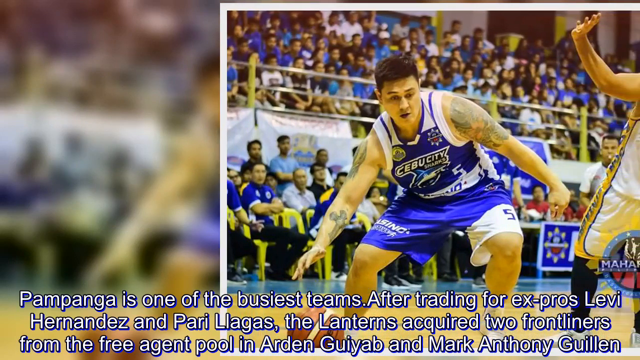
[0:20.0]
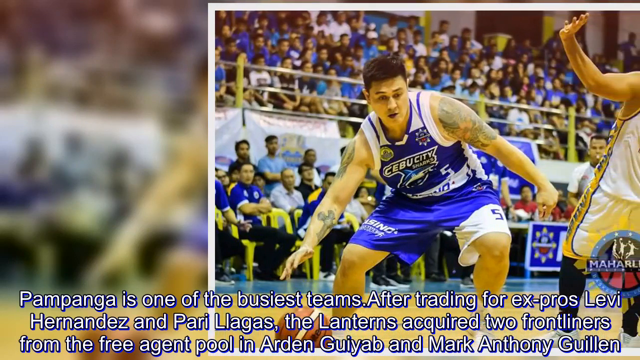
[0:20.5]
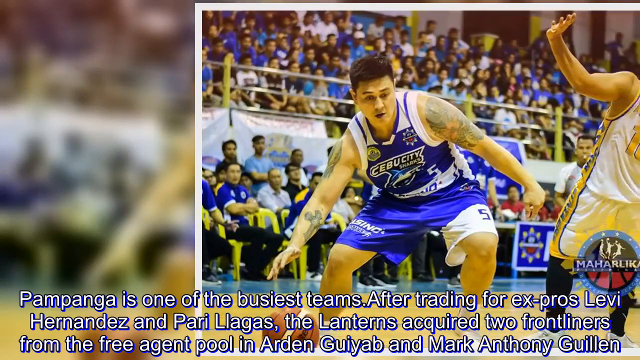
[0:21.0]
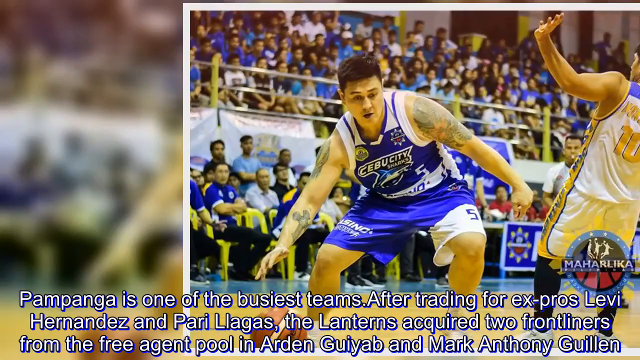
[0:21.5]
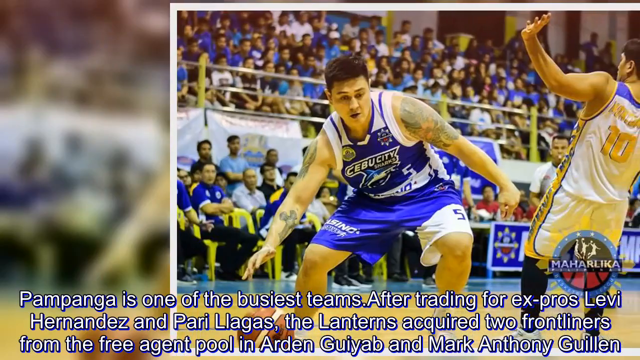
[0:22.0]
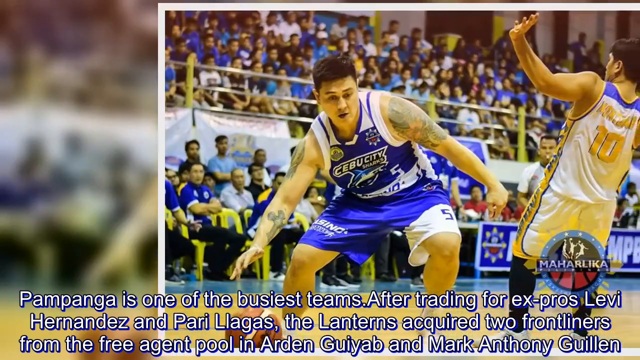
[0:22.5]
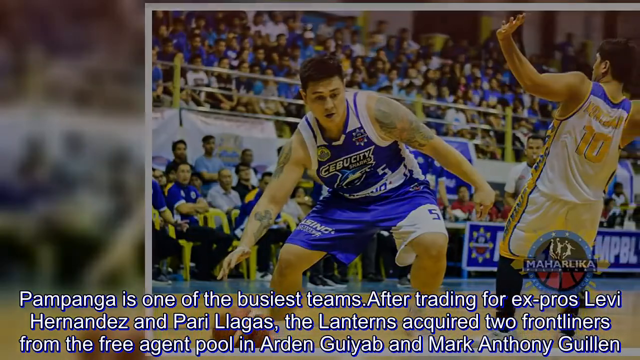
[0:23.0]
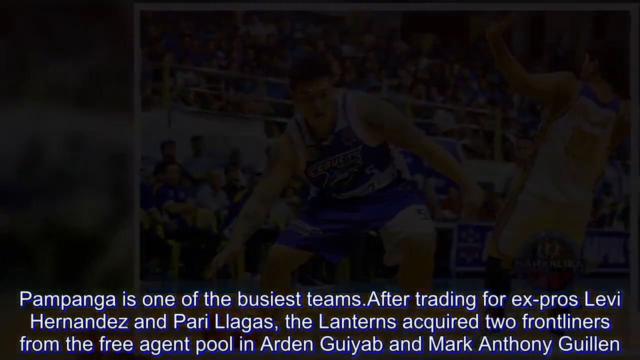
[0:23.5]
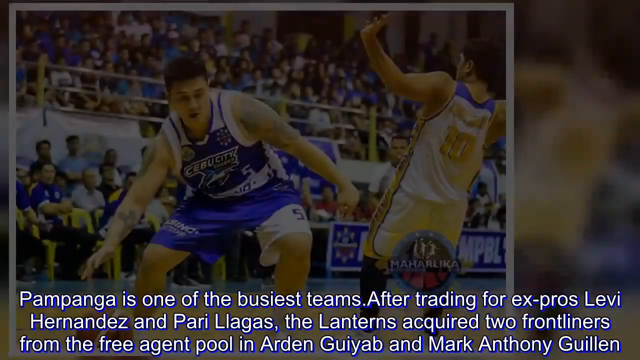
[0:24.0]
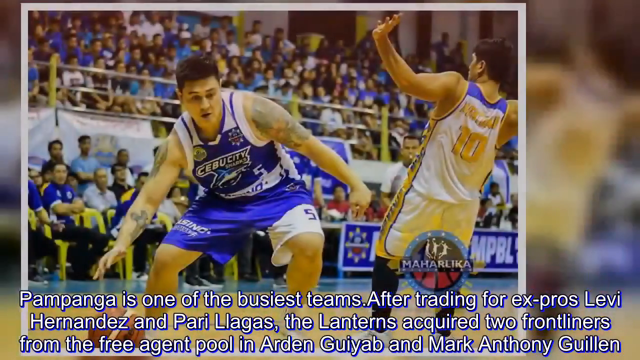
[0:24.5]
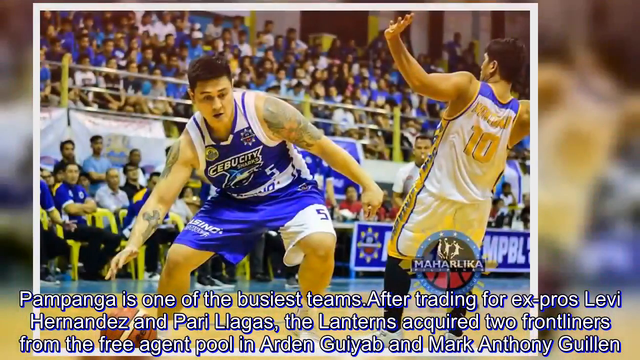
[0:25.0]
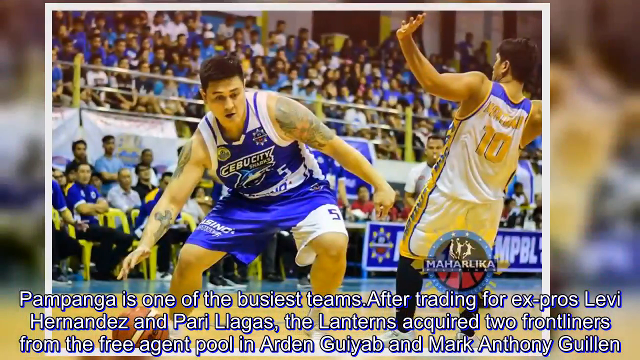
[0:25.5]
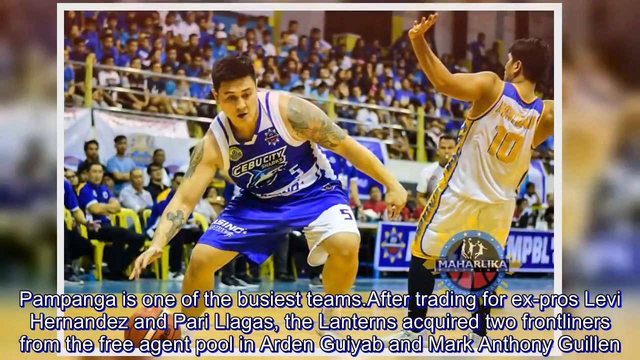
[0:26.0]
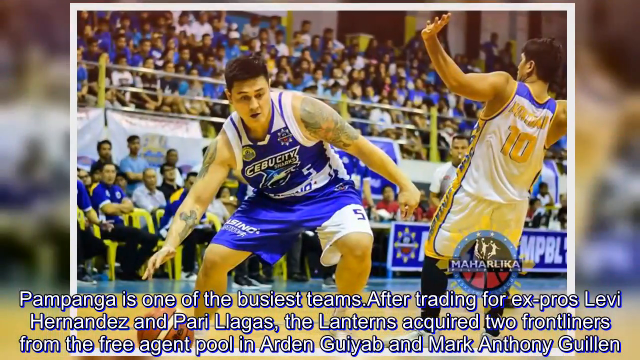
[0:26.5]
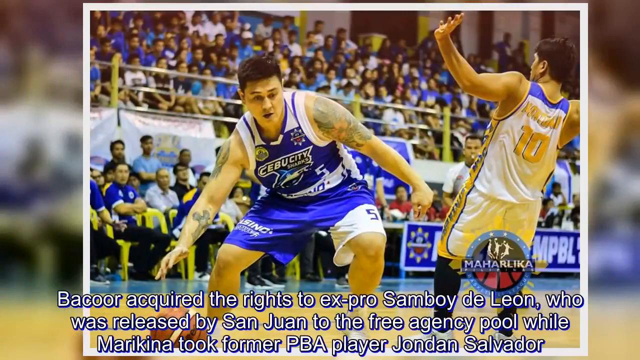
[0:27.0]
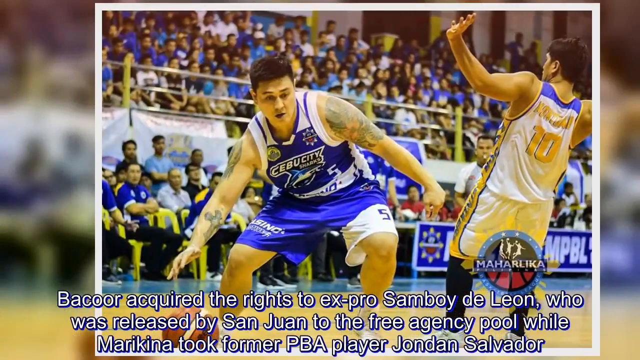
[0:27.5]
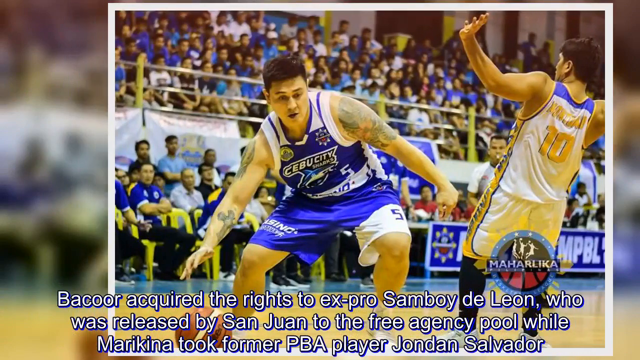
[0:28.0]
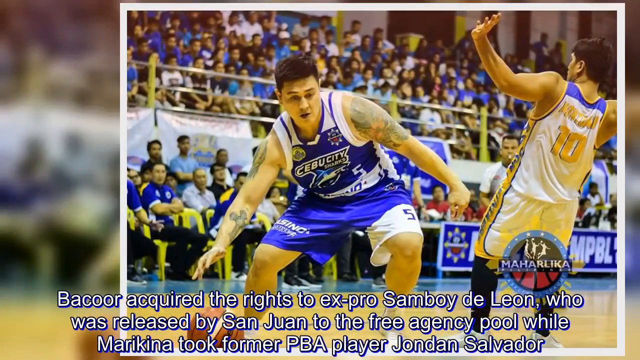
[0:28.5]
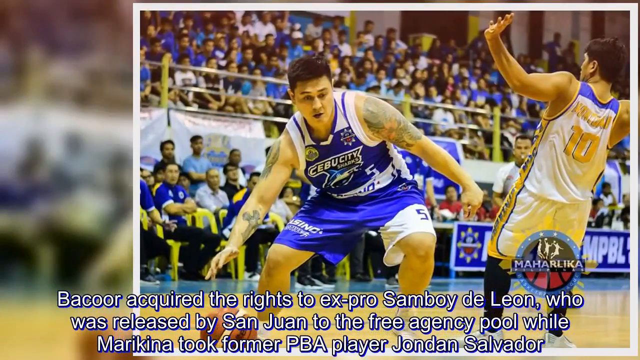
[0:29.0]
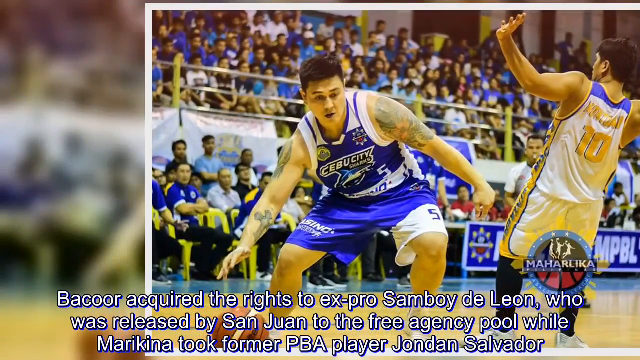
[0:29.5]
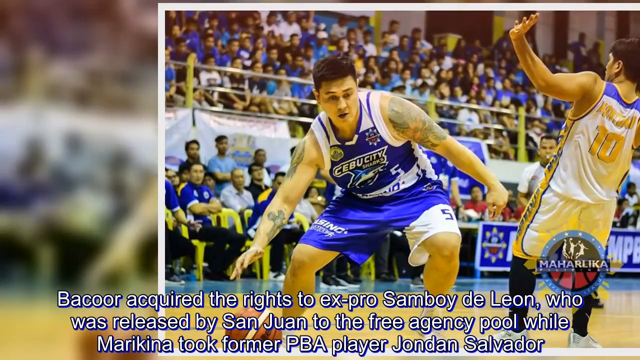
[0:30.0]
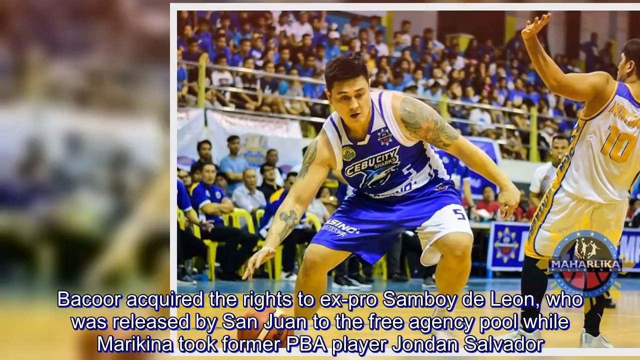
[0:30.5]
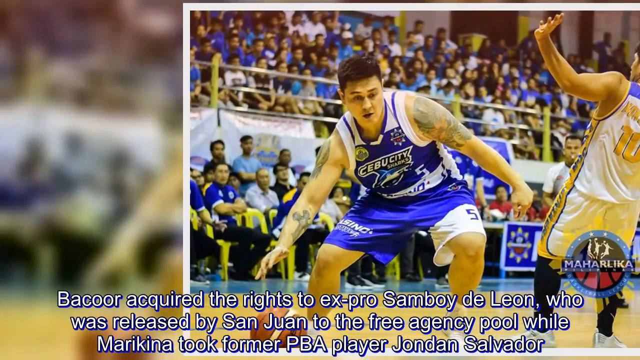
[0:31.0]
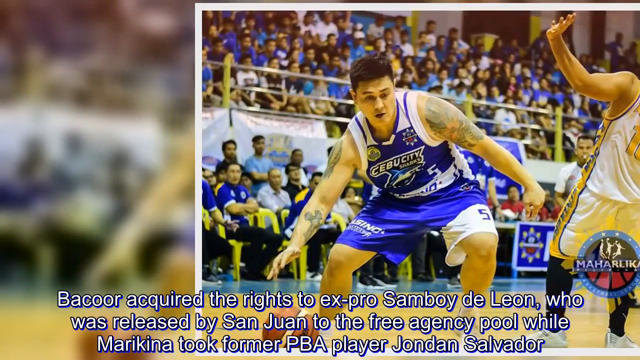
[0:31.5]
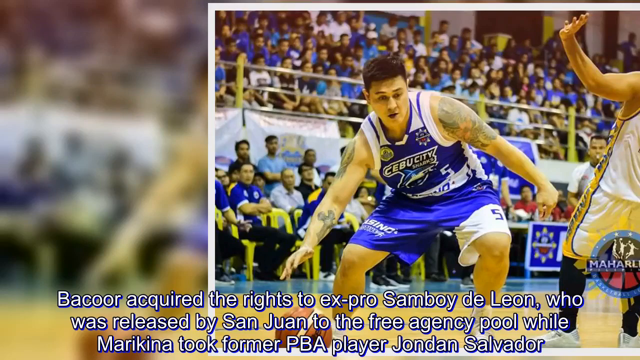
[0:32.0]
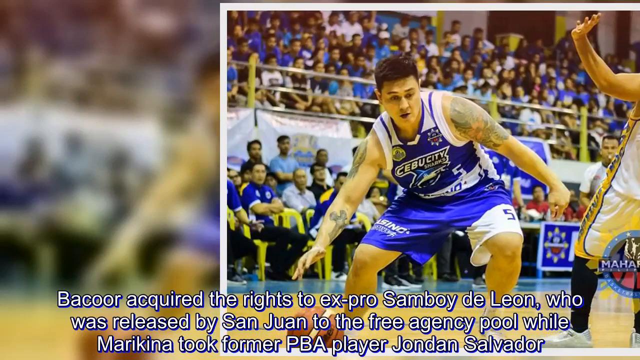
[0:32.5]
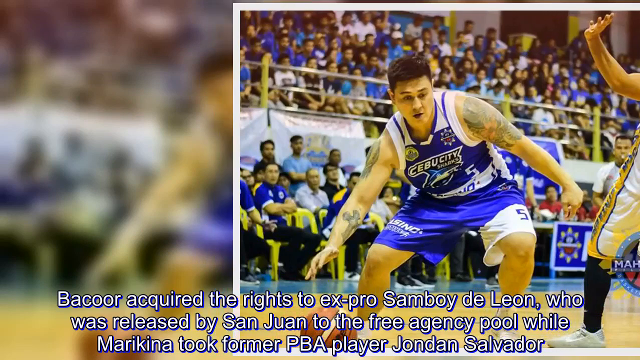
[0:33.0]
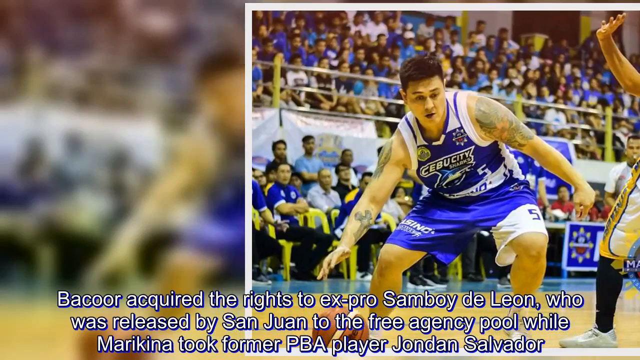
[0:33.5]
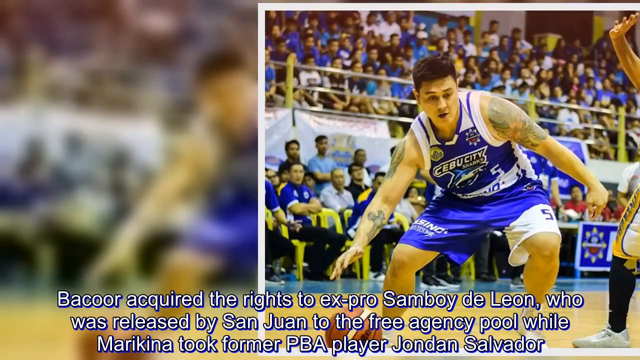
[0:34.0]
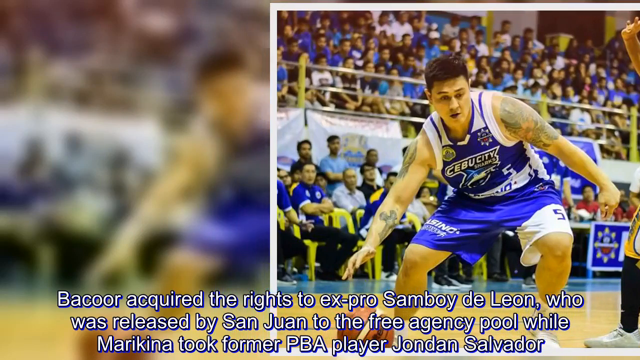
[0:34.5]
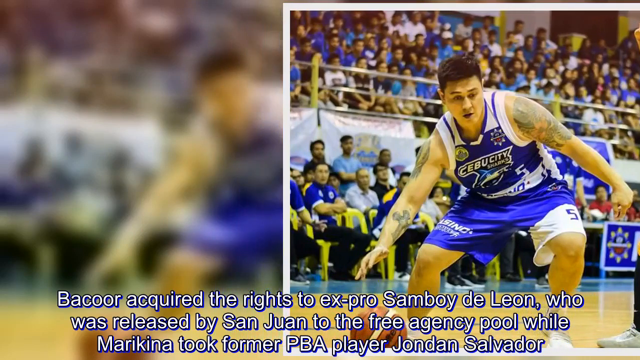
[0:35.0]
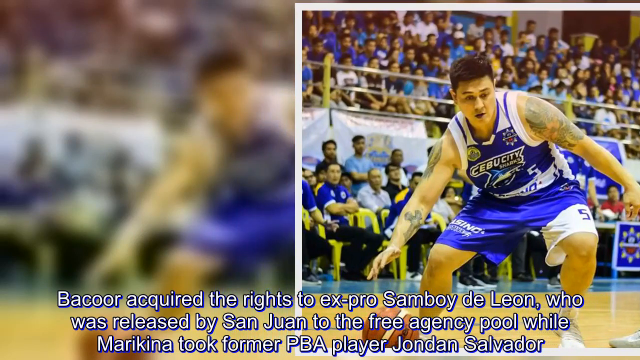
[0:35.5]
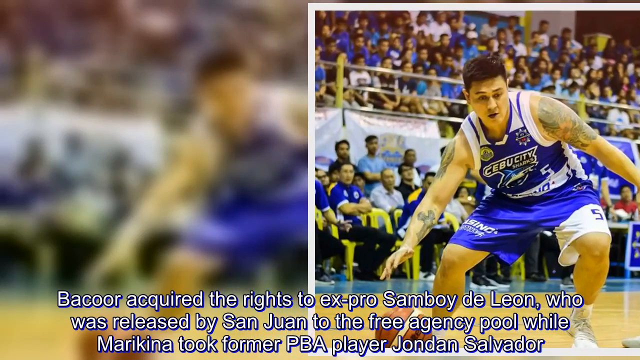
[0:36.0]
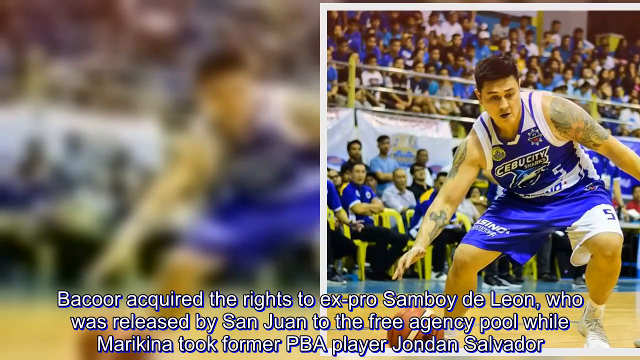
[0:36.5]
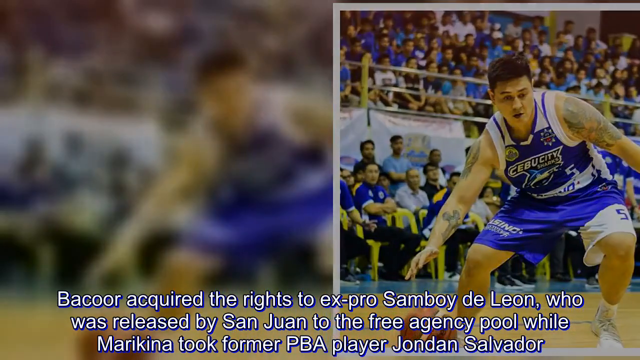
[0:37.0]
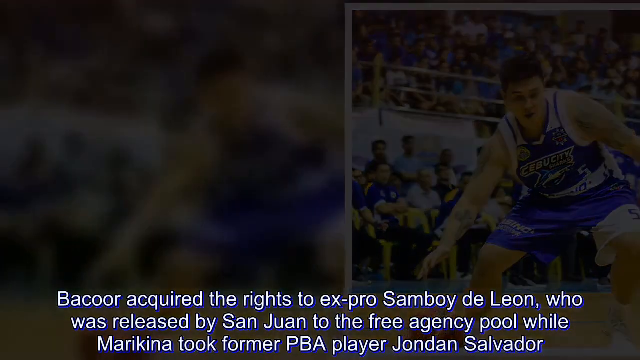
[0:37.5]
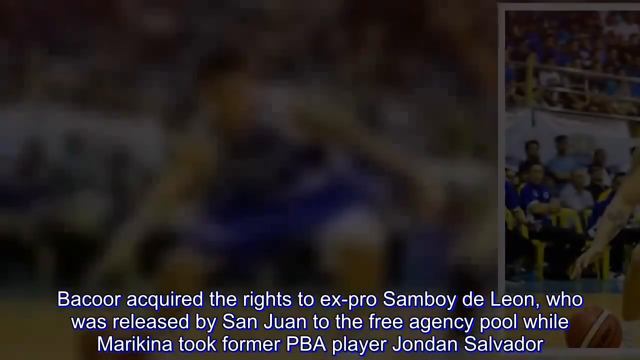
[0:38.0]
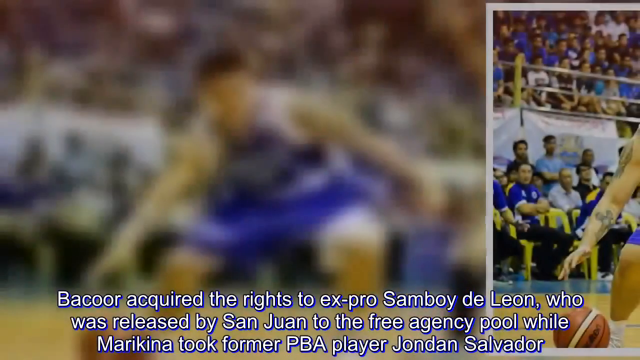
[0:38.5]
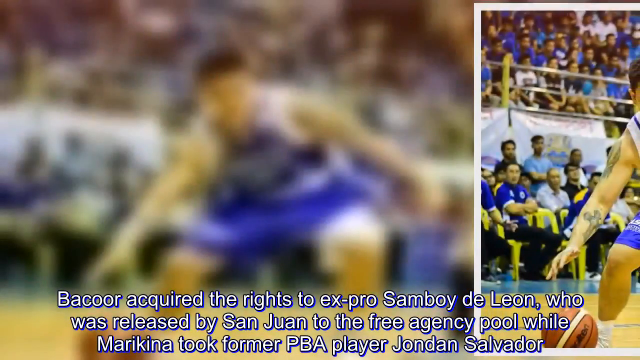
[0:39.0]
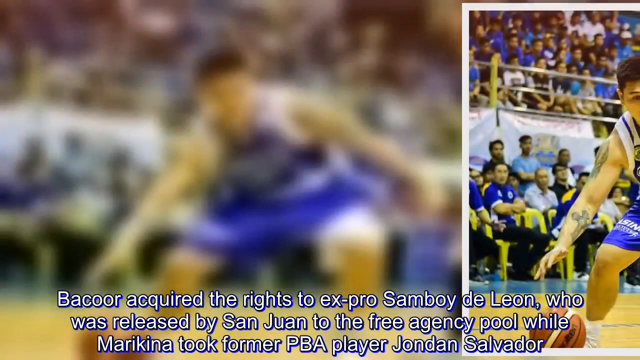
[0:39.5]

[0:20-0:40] The video is a slideshow with a single picture of a player getting the ball and trying to score. The text continues describing teams' trades and a player released by San Juan to the free agency pool.